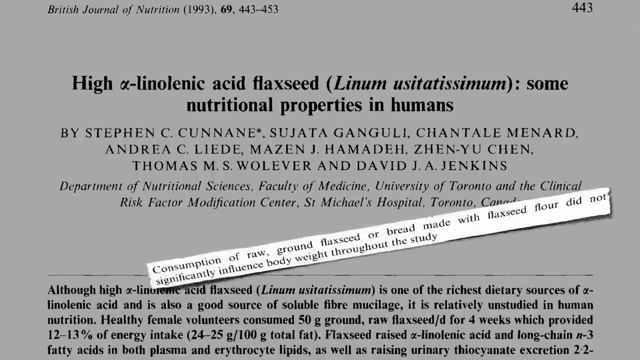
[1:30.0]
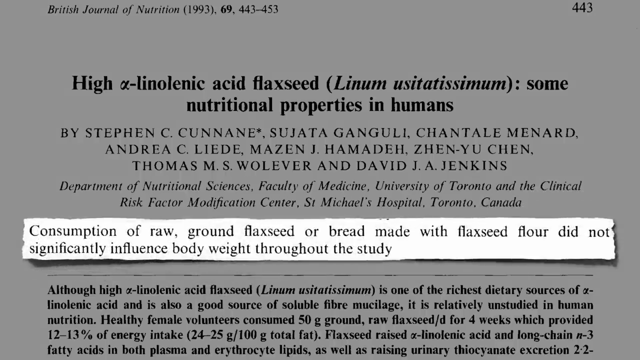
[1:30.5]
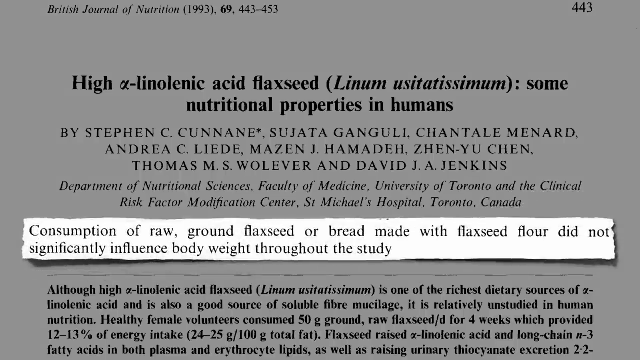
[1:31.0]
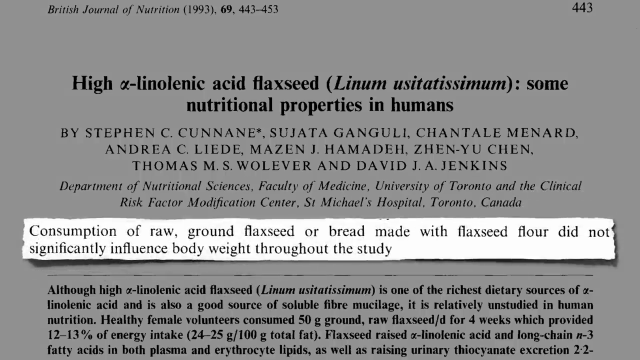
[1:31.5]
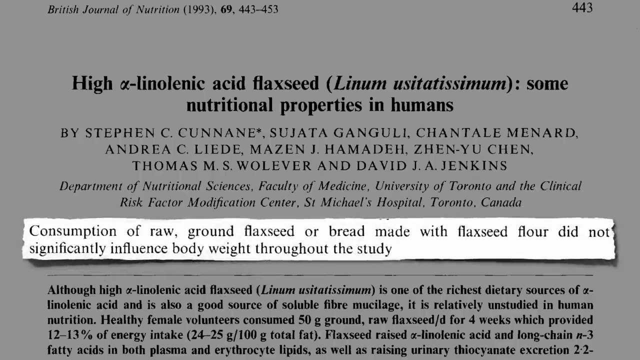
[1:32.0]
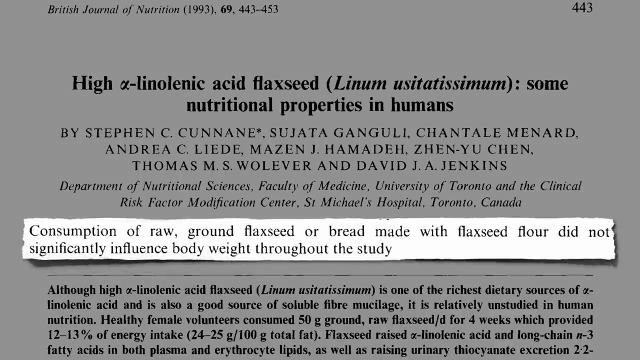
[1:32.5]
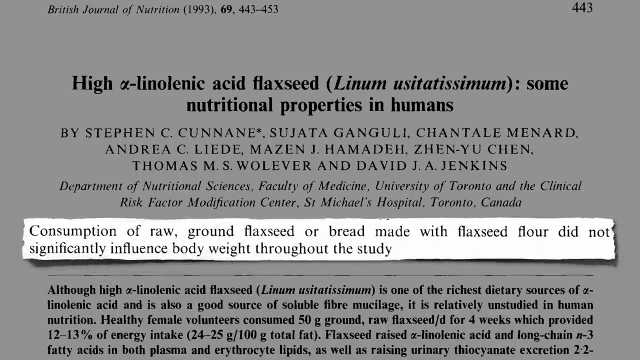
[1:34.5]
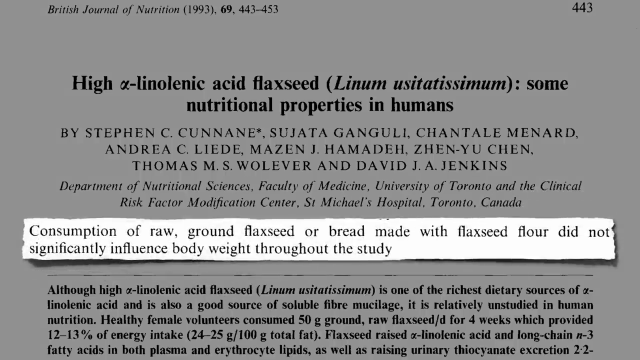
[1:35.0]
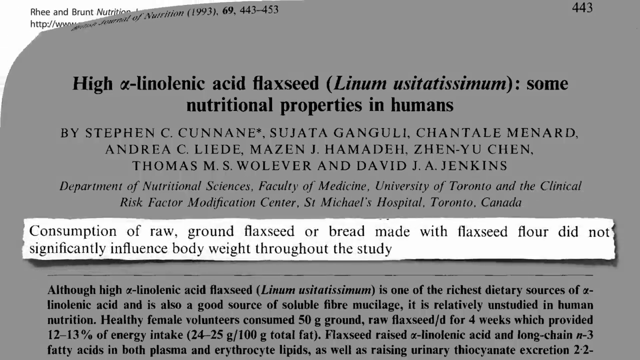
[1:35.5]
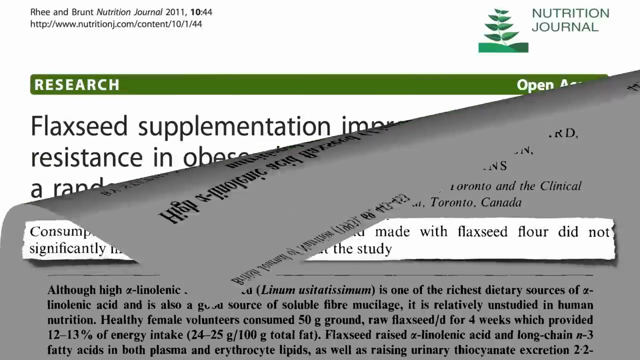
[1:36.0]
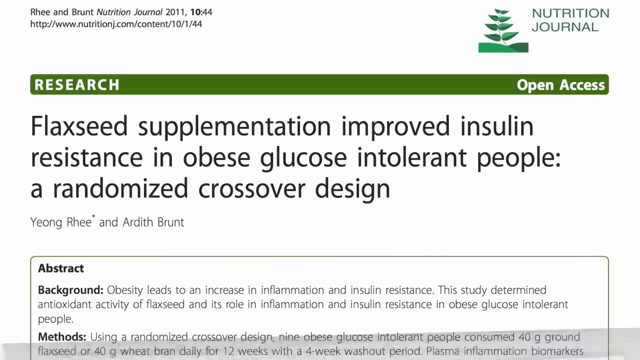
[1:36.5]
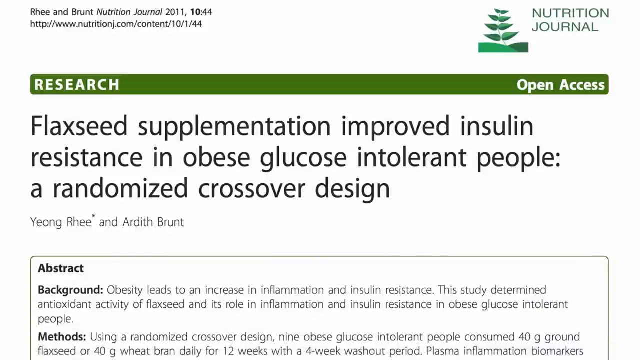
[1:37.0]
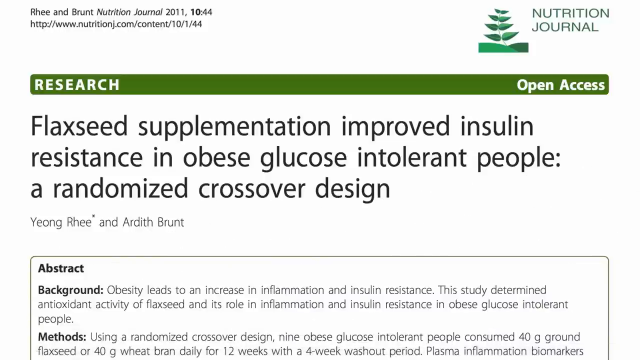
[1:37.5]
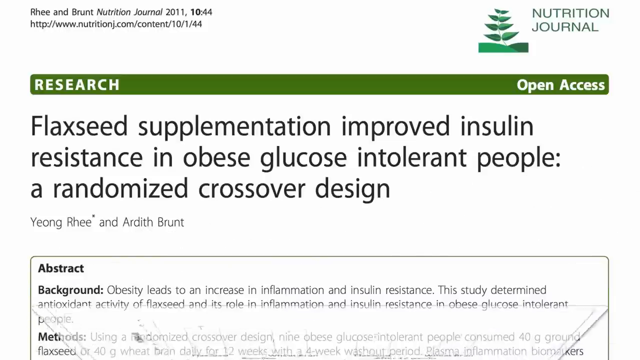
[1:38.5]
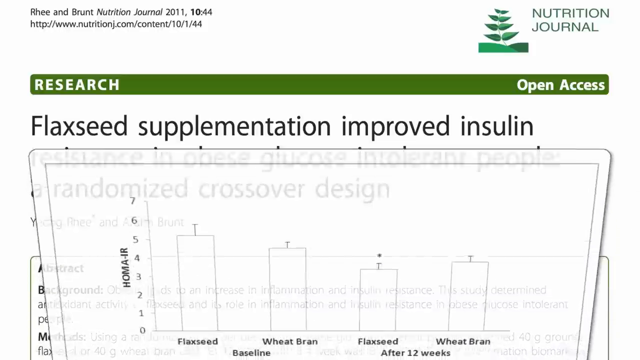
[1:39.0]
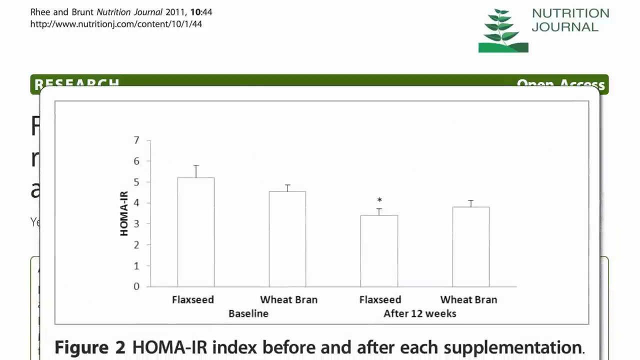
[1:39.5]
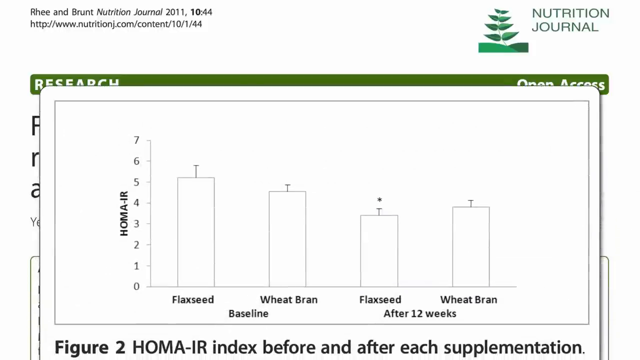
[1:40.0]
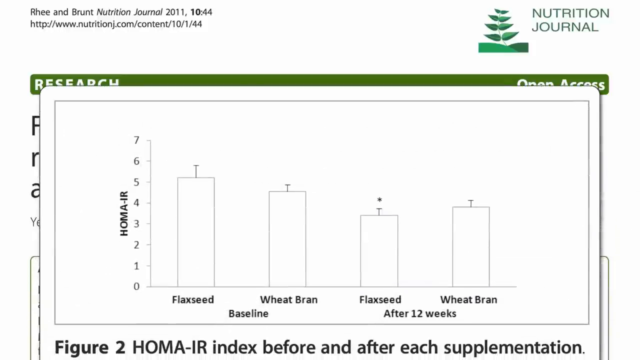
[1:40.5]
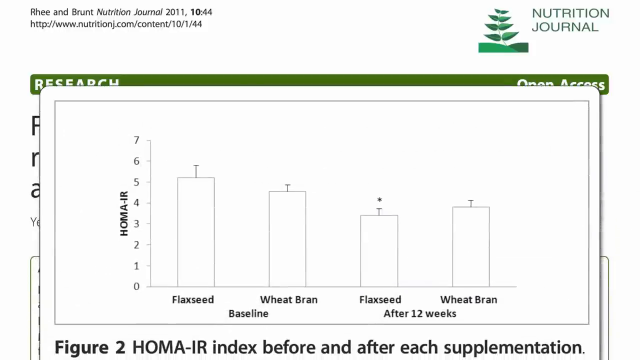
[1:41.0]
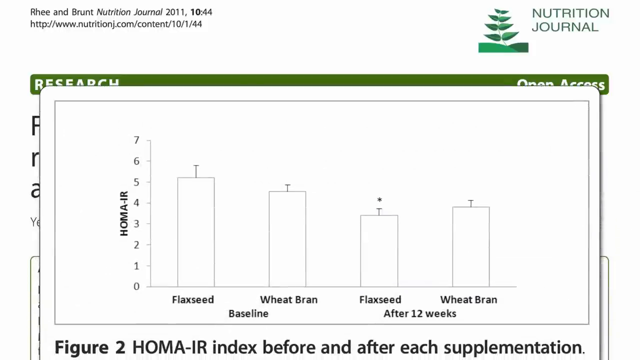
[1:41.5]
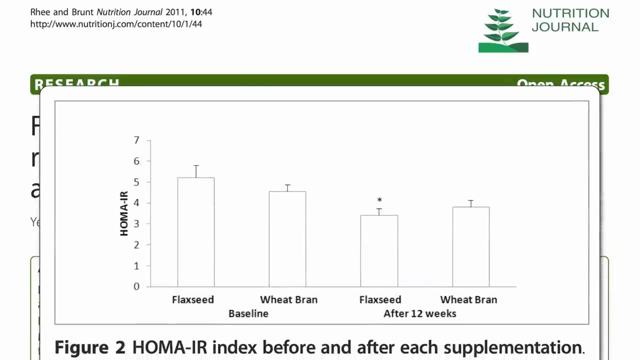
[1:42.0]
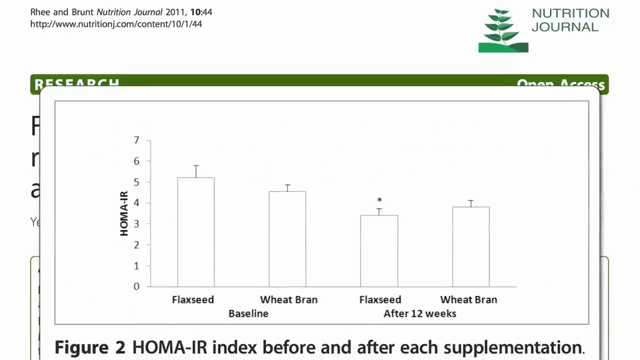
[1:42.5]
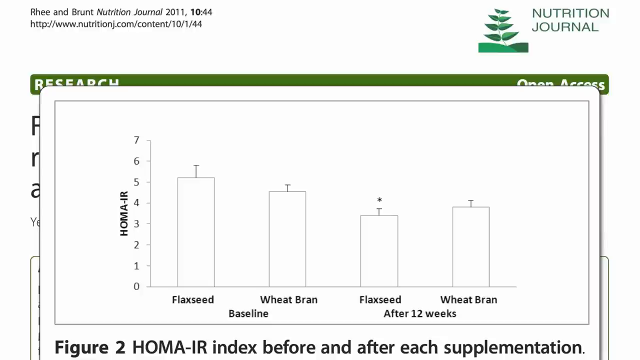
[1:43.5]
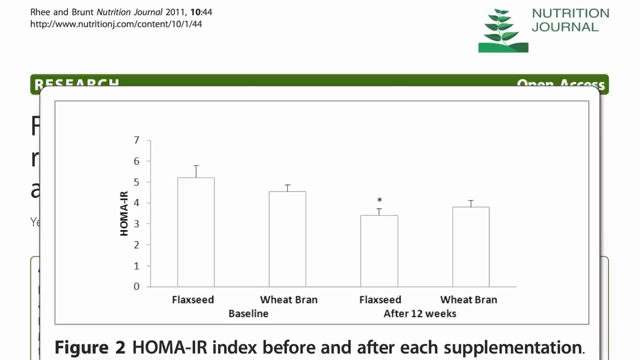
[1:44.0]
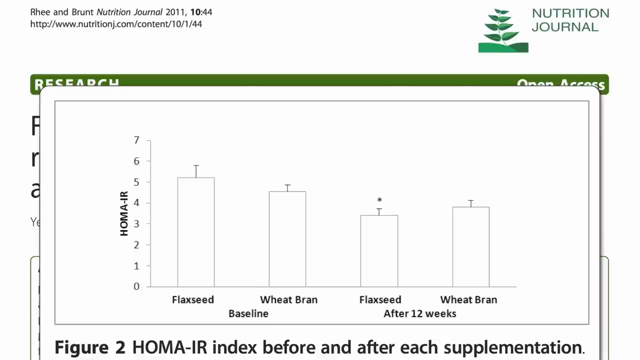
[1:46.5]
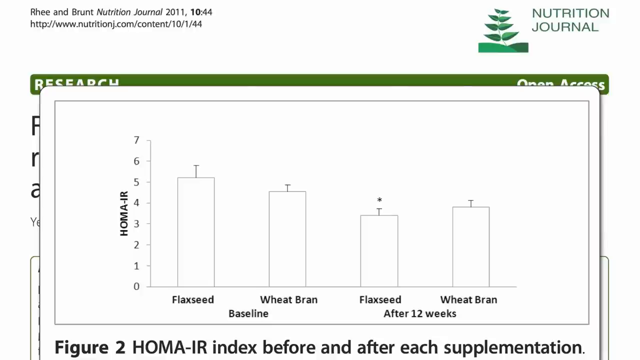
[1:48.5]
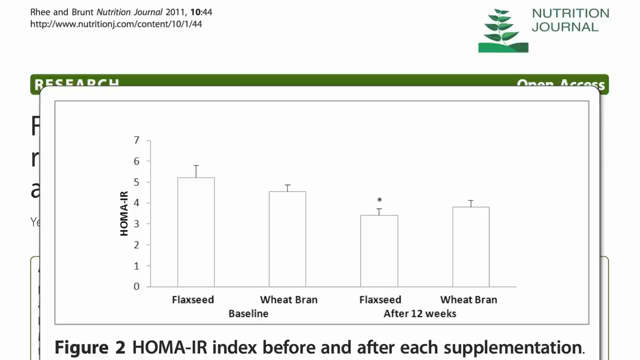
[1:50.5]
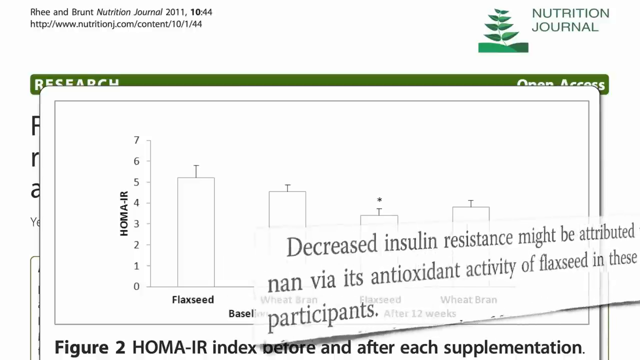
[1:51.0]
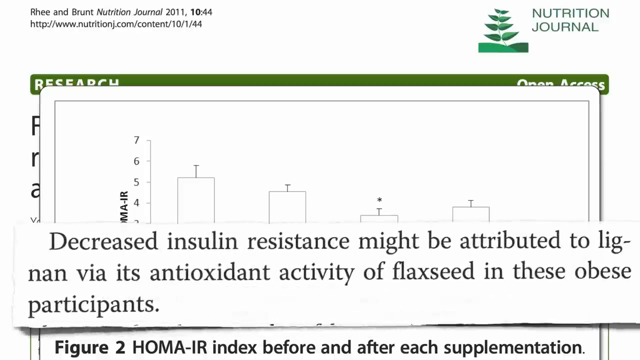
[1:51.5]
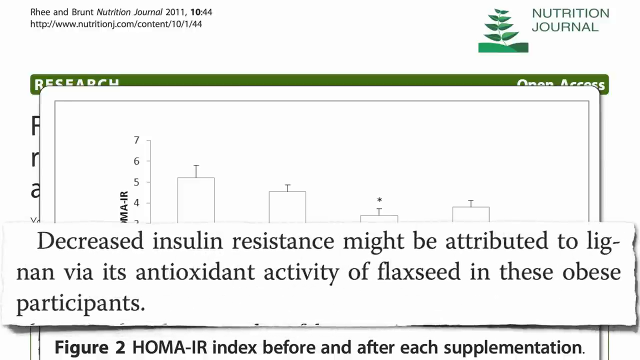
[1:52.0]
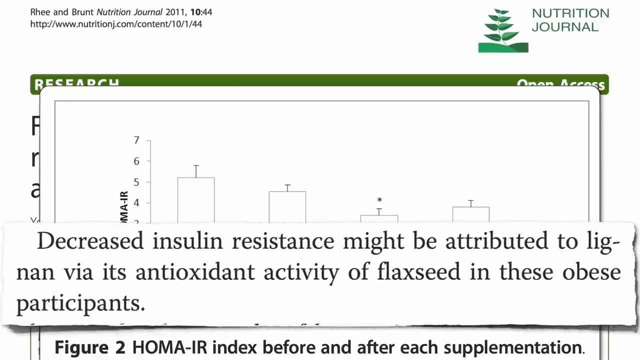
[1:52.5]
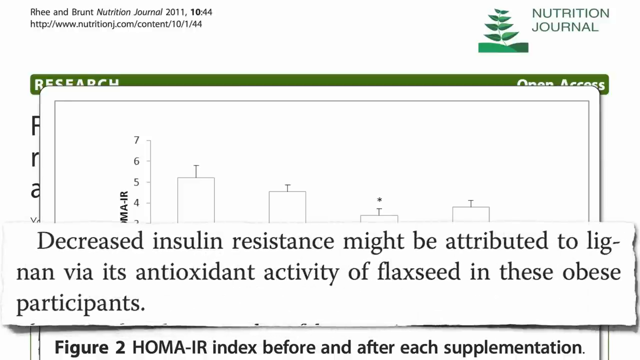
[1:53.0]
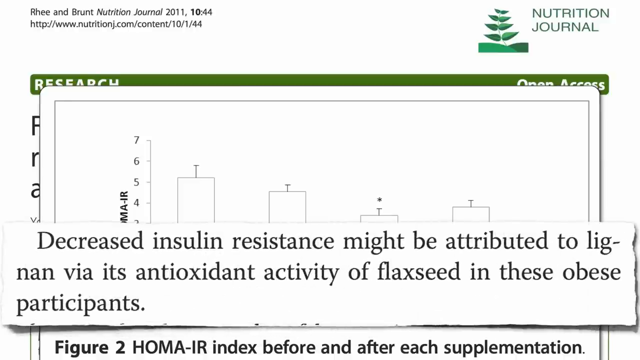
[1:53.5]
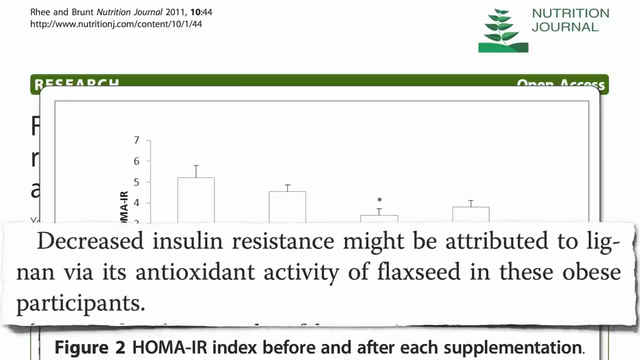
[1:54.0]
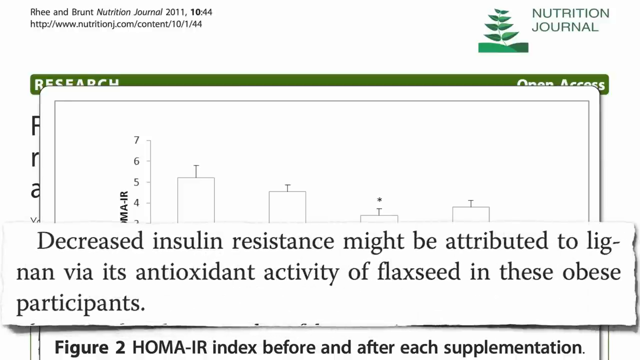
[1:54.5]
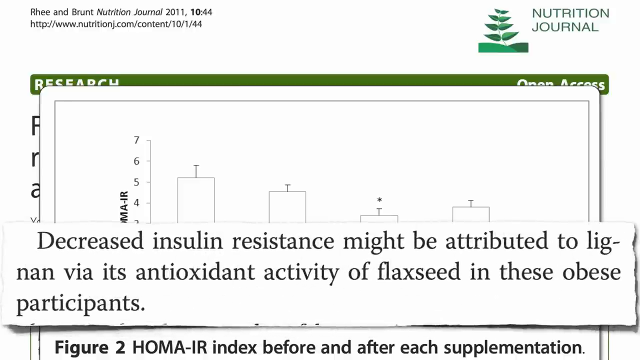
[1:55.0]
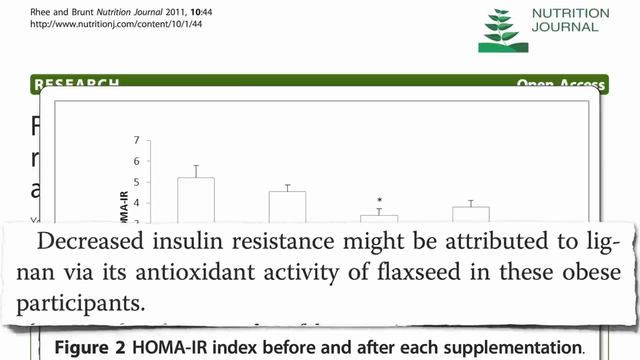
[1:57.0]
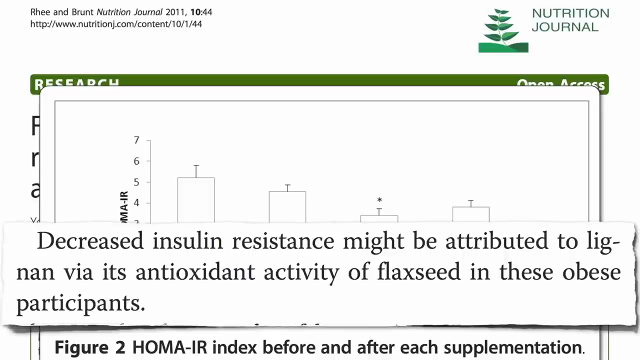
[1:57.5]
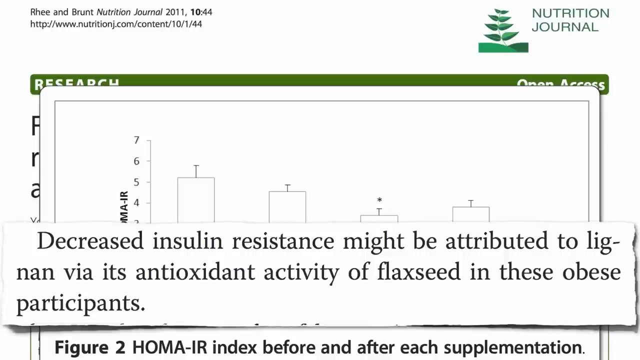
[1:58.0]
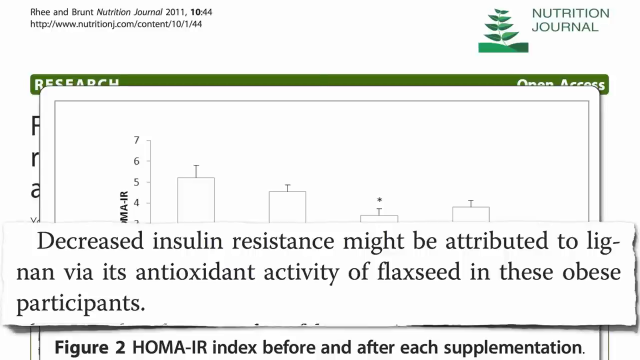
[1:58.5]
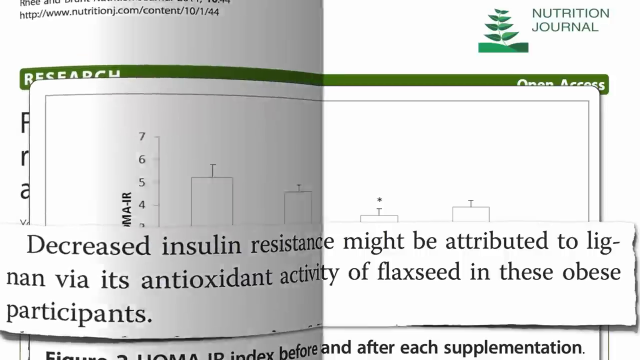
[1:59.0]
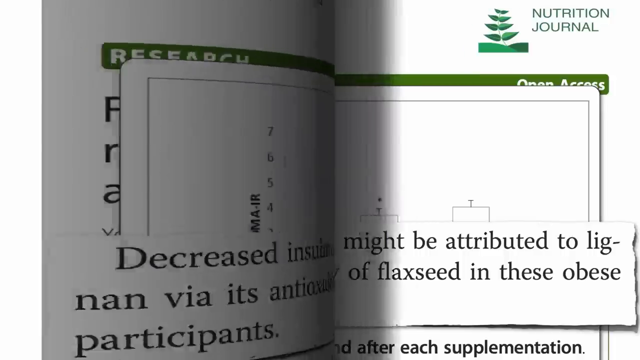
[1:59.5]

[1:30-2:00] An excerpt from the article flashes onto the screen, reading "consumption of raw ground flaxseed or bread made with flaxseed flour did not significantly influence body weight throughout the study." The page then peels away to reveal another page with a reference to "Nutrition Journal 2011" in small black font at the top left, and just below it a web address, "http://www.nutritionj.com/content/10/1/44". In the far right corner of the page, "Nutrition Journal" appears in dark green font, with "Nutrition" on top and "journal" below, and to the left of it is a dark green gradient picture of what looks like a leaf growing out of grass or a green surface. A thick, more grass-green bar runs from left to right across the screen, with "research" in white capitals on the far left and "open access" in small caps on the far right. Below it reads "flaxseed supplementation improved insulin resistance in obese glucose intolerant people a randomized crossover design".